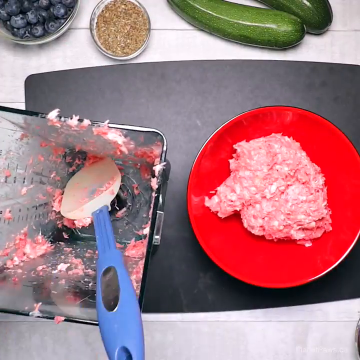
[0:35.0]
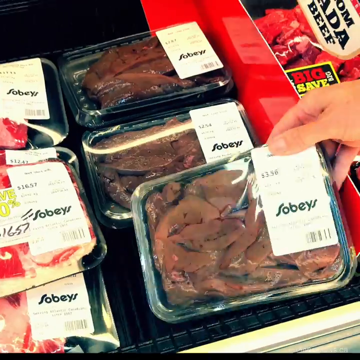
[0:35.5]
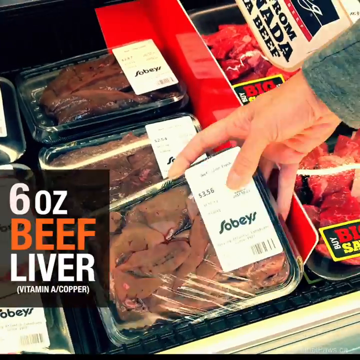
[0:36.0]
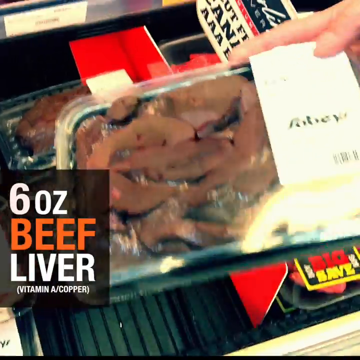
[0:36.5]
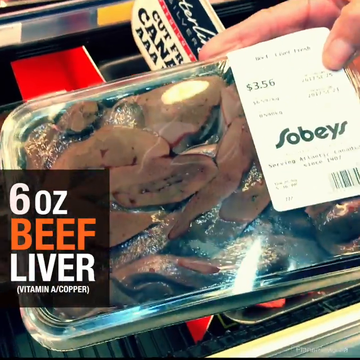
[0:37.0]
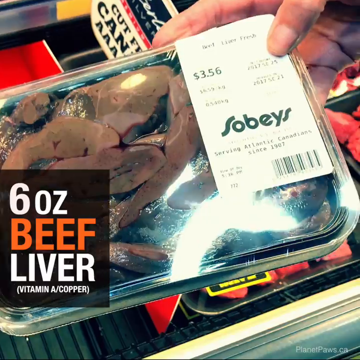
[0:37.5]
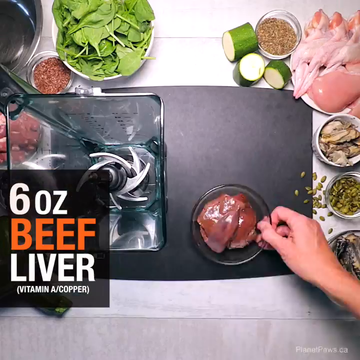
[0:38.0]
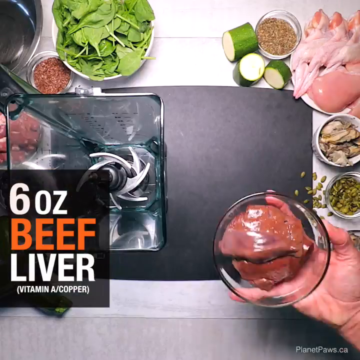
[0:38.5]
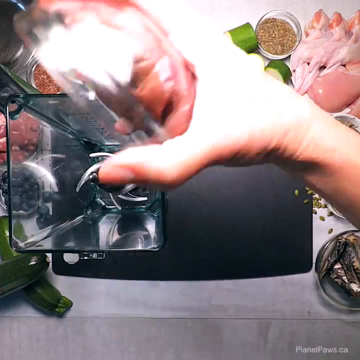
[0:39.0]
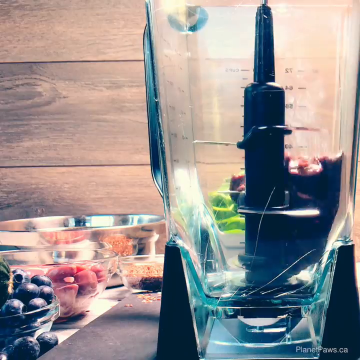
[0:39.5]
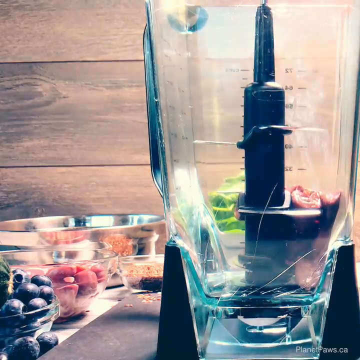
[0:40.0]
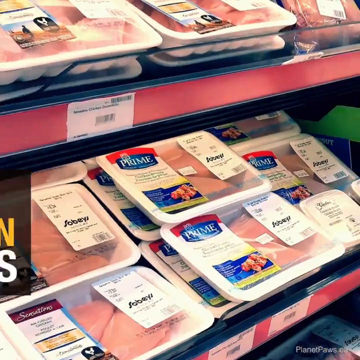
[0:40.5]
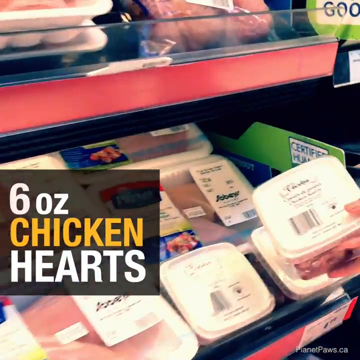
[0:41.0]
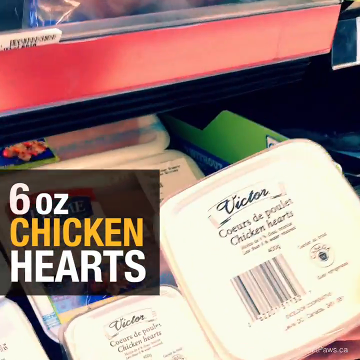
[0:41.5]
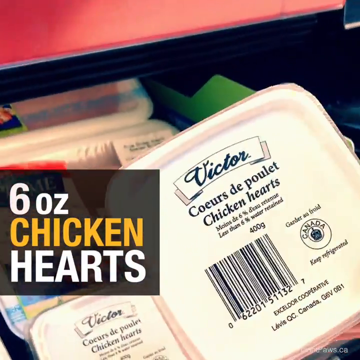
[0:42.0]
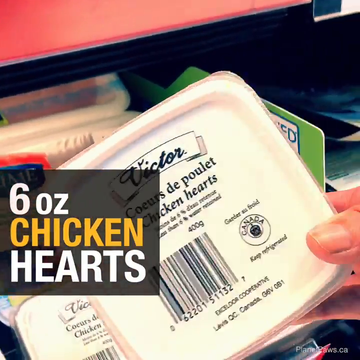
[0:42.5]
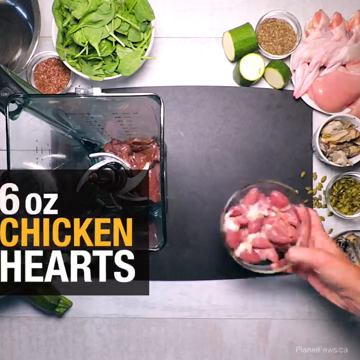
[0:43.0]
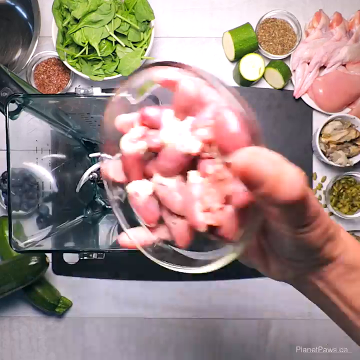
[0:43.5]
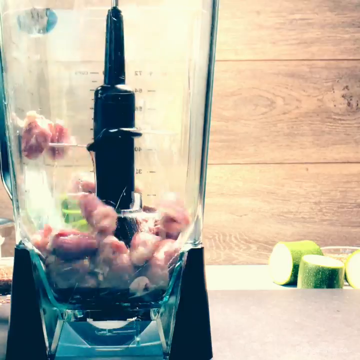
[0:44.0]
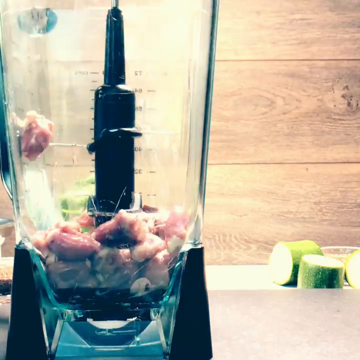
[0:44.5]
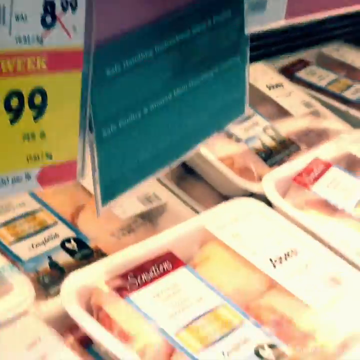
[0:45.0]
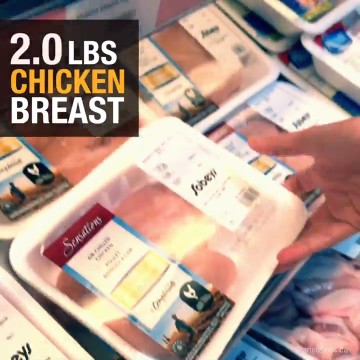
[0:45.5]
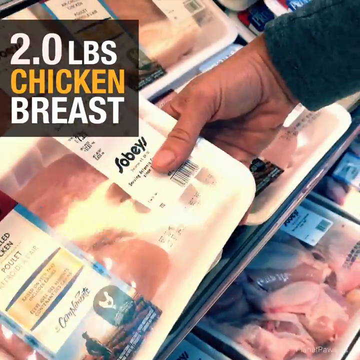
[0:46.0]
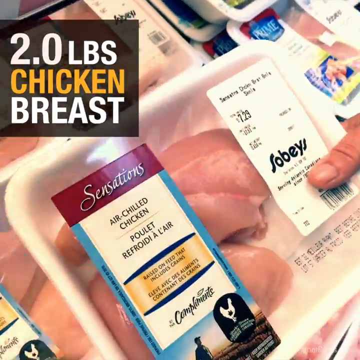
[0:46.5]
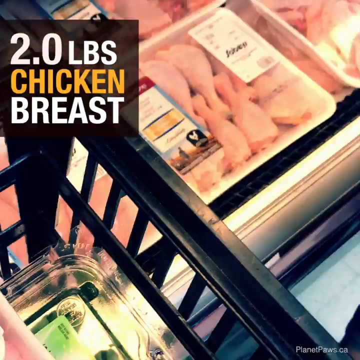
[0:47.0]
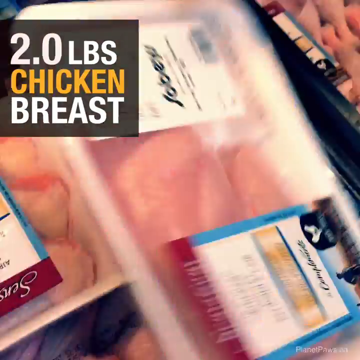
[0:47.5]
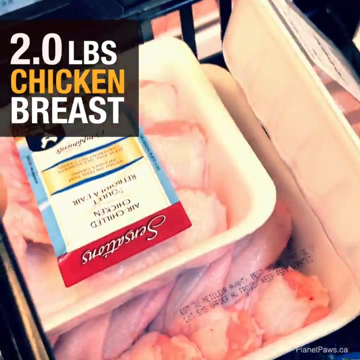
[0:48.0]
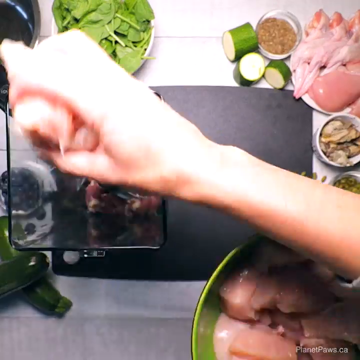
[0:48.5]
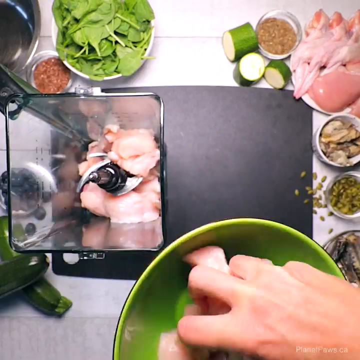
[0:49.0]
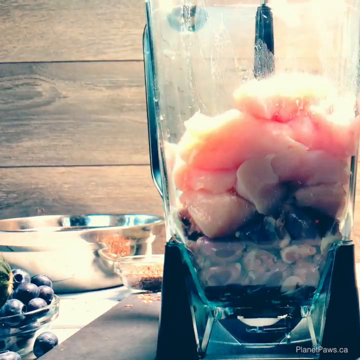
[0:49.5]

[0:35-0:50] Other meat goes into the blender. A grocery store is shown. Six ounces of chicken hearts, two pounds of chicken breast and six ounces of beef liver, apparently part of the recipe, are put into the blender.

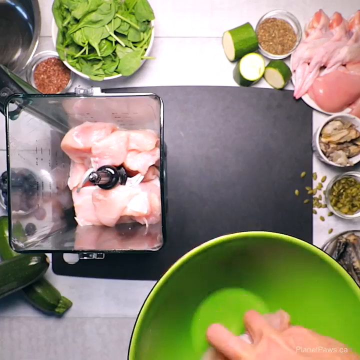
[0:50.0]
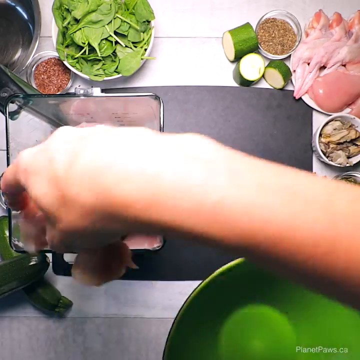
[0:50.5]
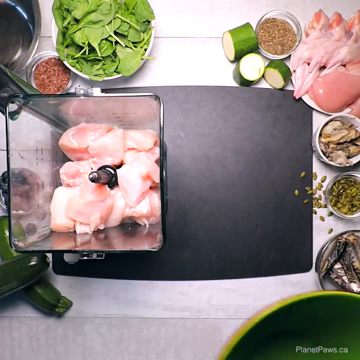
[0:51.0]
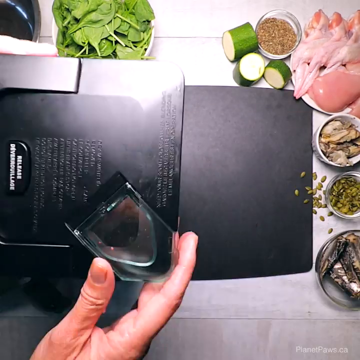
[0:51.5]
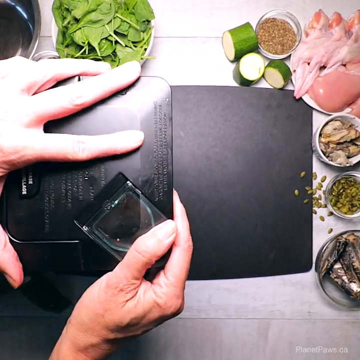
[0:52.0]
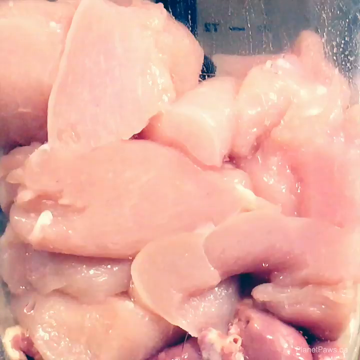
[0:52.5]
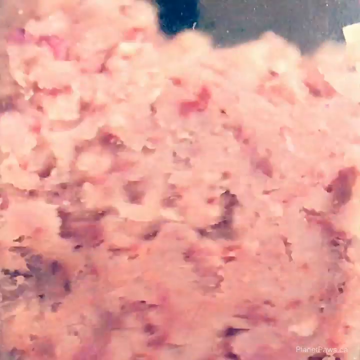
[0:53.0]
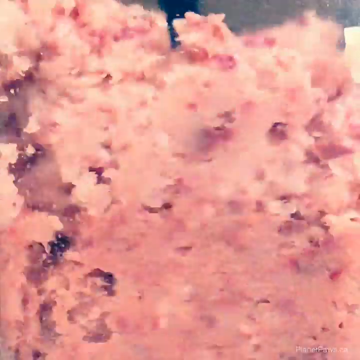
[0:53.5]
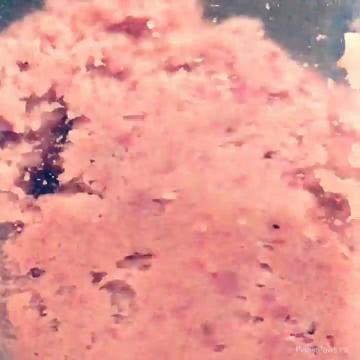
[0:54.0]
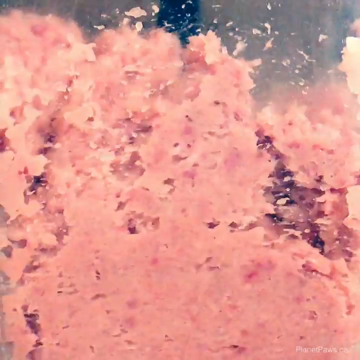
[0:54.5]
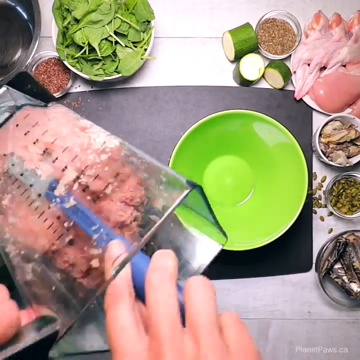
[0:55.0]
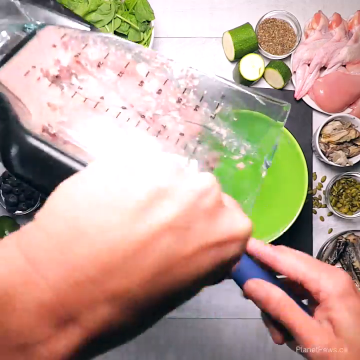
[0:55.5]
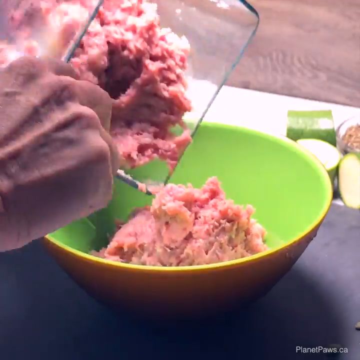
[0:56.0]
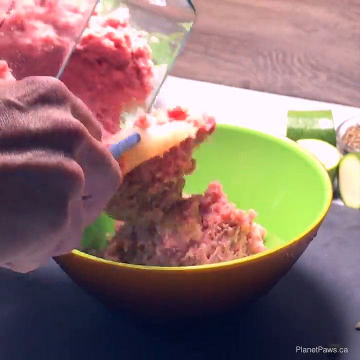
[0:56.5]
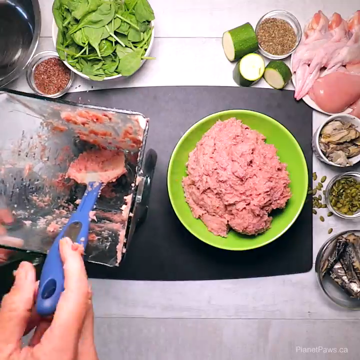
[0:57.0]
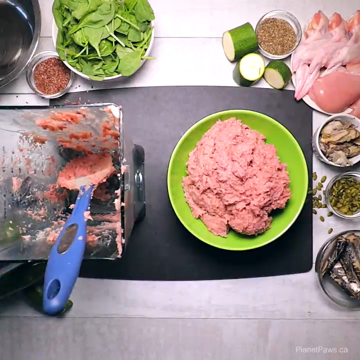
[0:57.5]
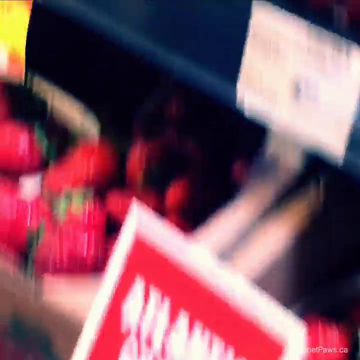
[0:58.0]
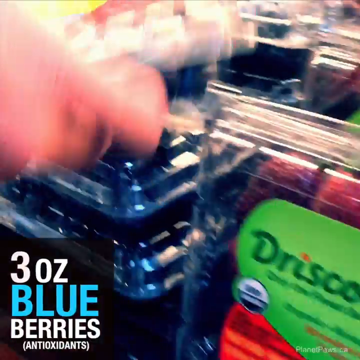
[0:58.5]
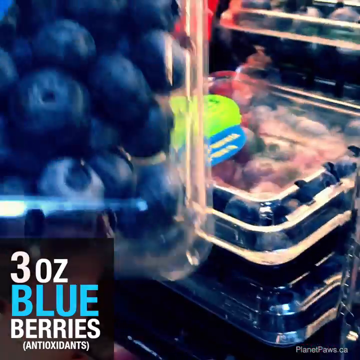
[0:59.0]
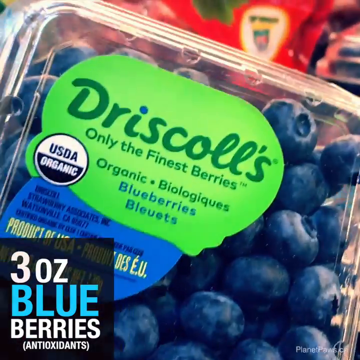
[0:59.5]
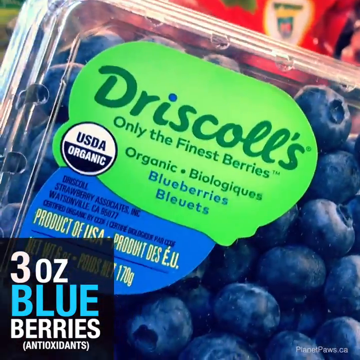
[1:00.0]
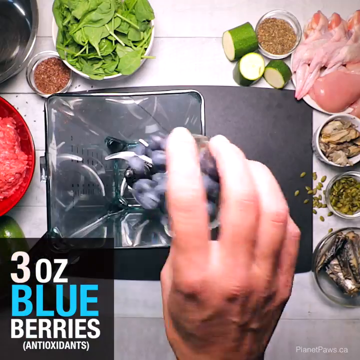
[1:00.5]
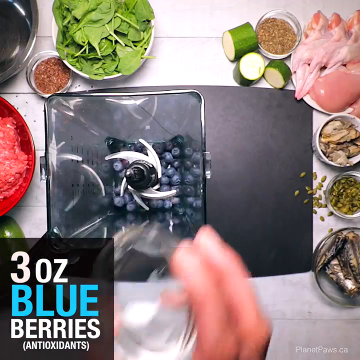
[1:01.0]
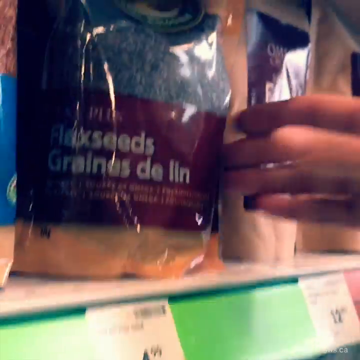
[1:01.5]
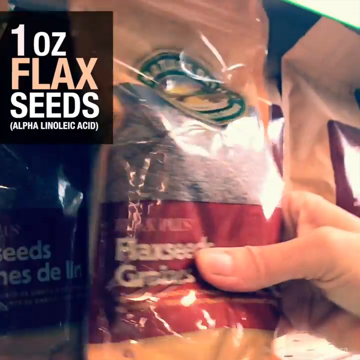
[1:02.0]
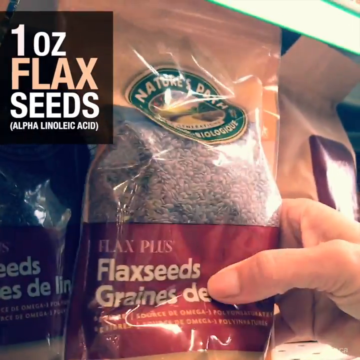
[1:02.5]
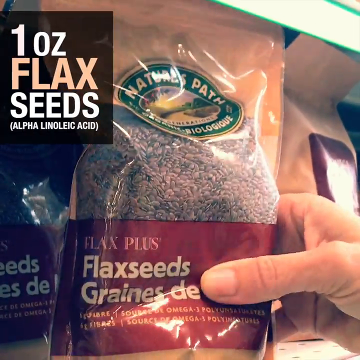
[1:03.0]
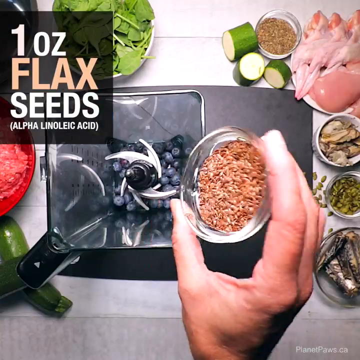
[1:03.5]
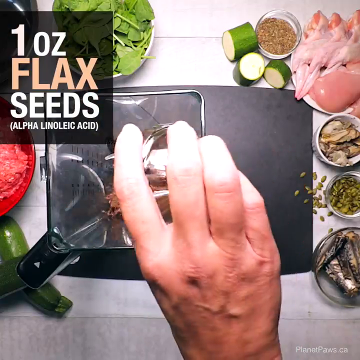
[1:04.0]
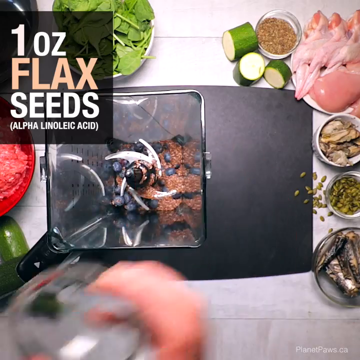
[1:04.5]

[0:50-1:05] A man pulls things out of the blender and puts them into a green bowl. He adds three ounces of blueberries and an ounce of flaxseed to the blender, which apparently already holds the chicken heart and chicken breast. Other ingredients are set out on the side all around the blender, and he seems to keep putting more pieces of the recipe into the blender.